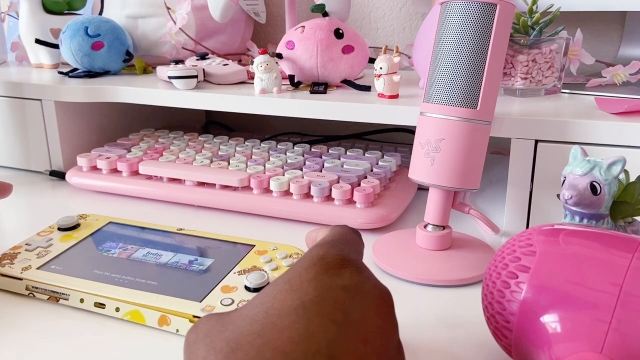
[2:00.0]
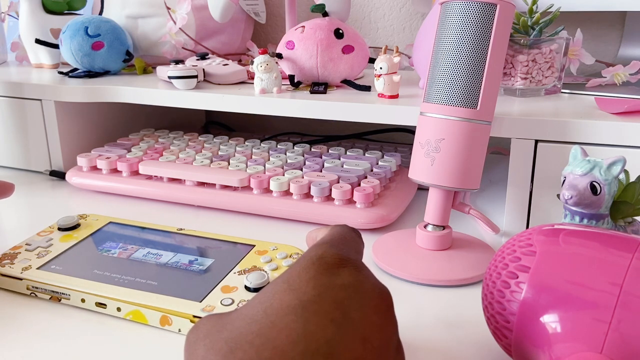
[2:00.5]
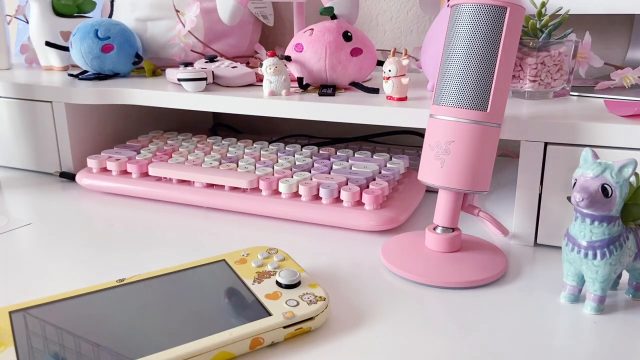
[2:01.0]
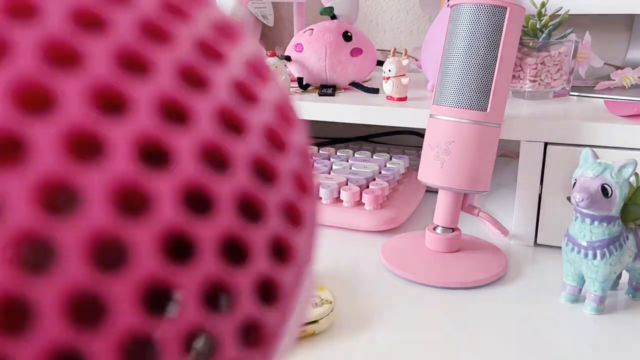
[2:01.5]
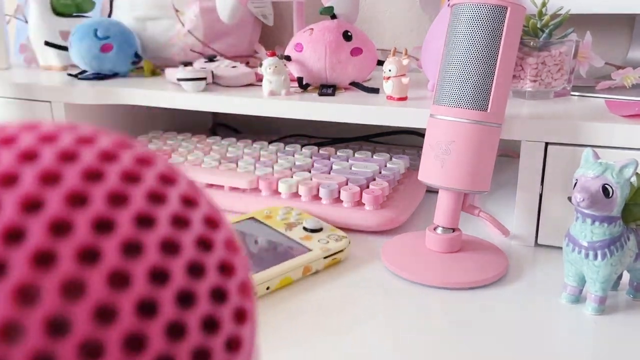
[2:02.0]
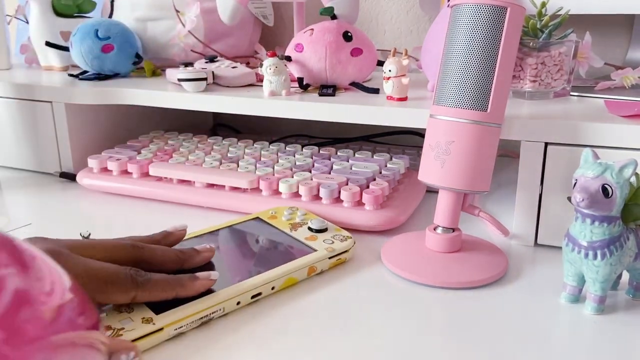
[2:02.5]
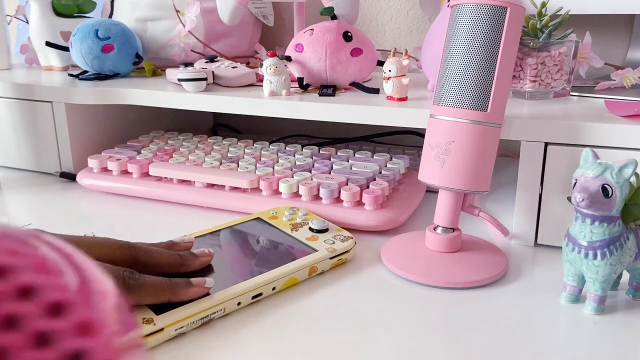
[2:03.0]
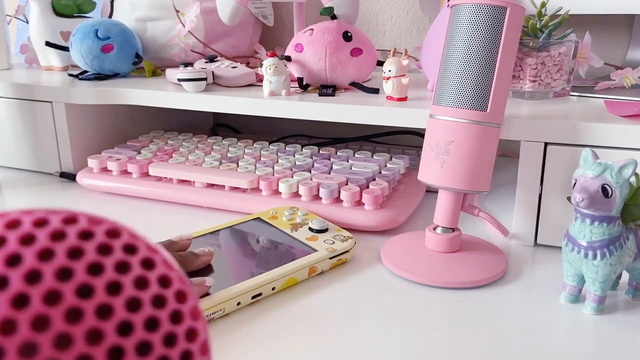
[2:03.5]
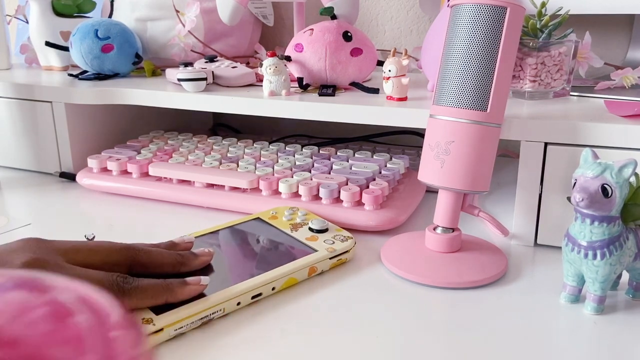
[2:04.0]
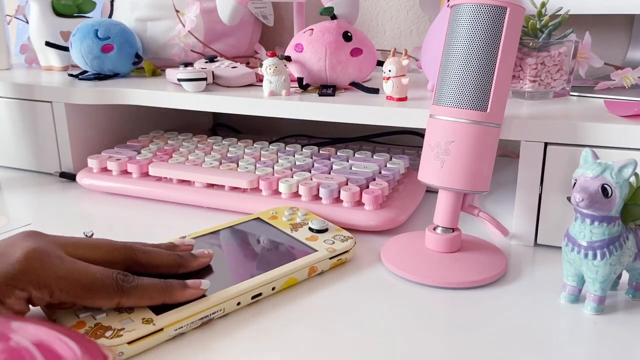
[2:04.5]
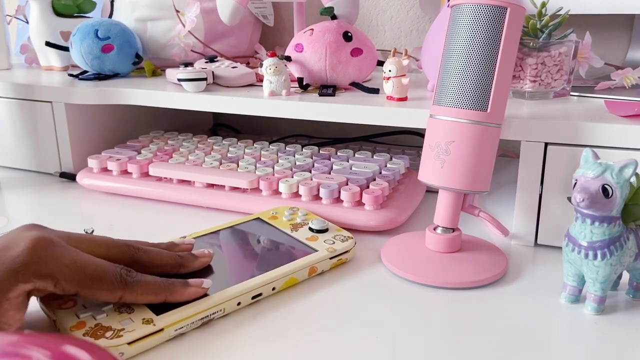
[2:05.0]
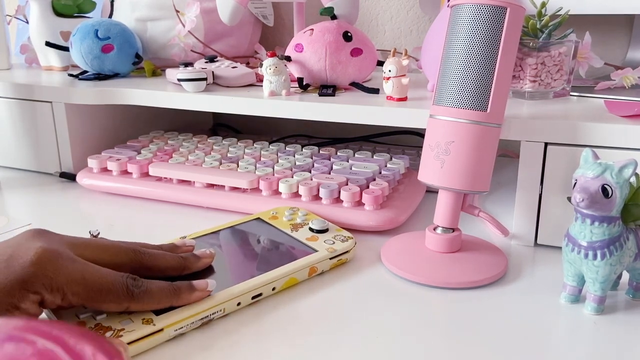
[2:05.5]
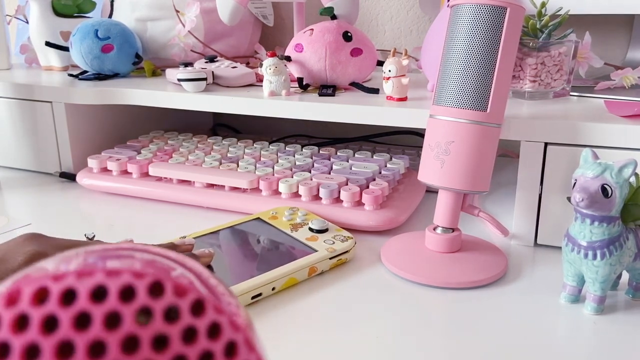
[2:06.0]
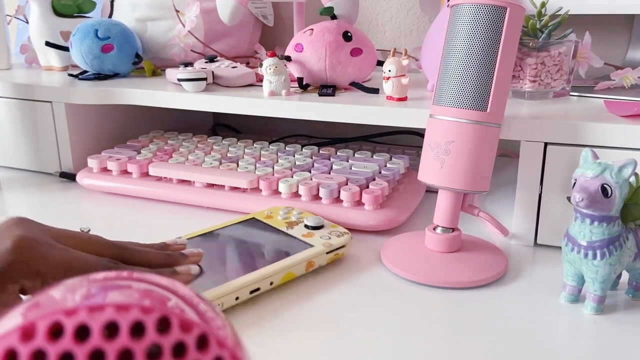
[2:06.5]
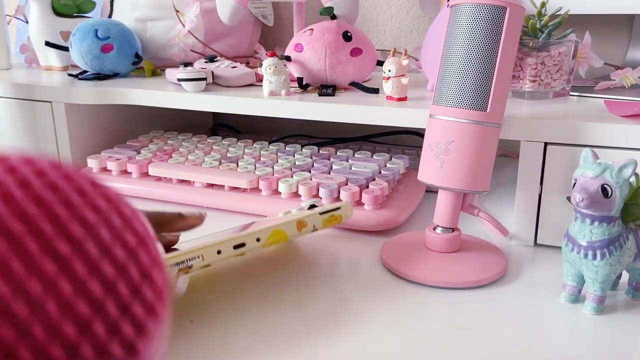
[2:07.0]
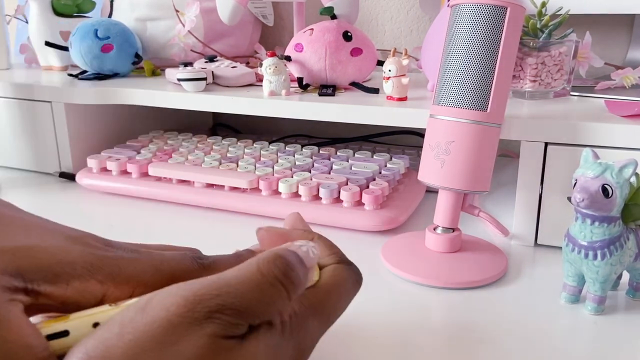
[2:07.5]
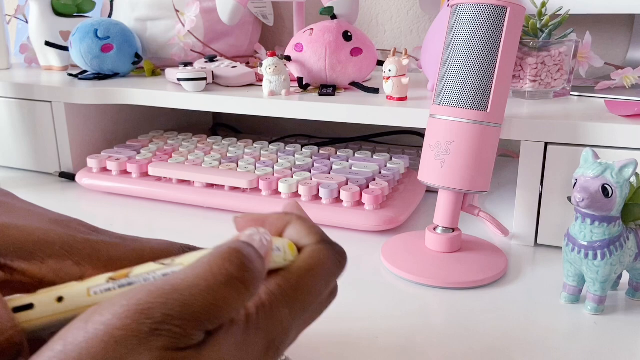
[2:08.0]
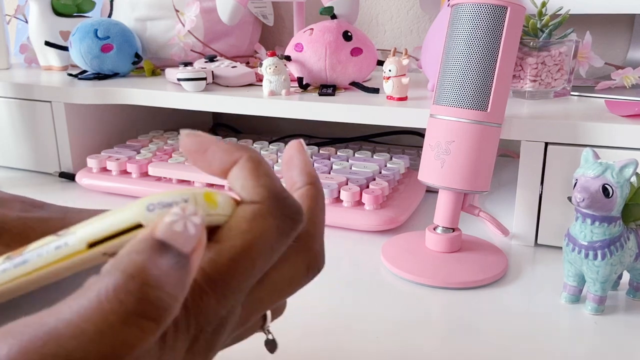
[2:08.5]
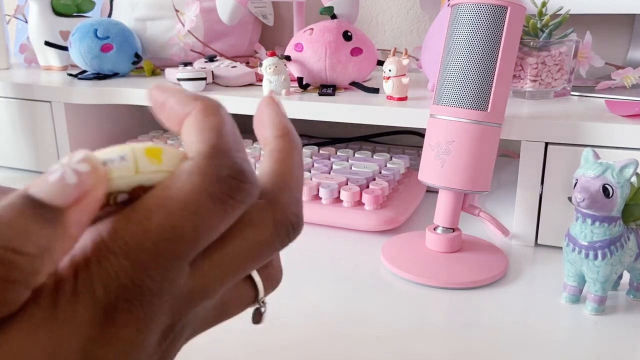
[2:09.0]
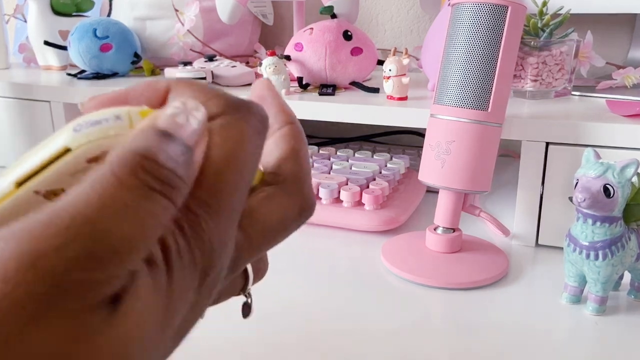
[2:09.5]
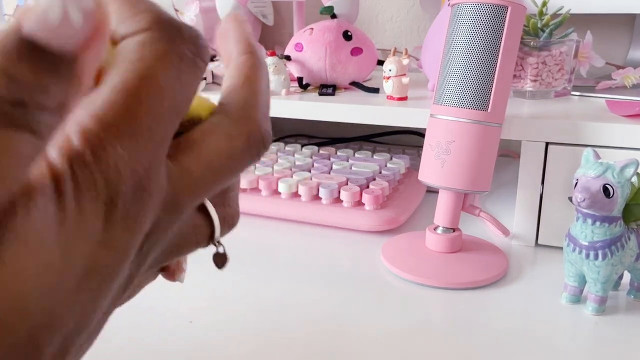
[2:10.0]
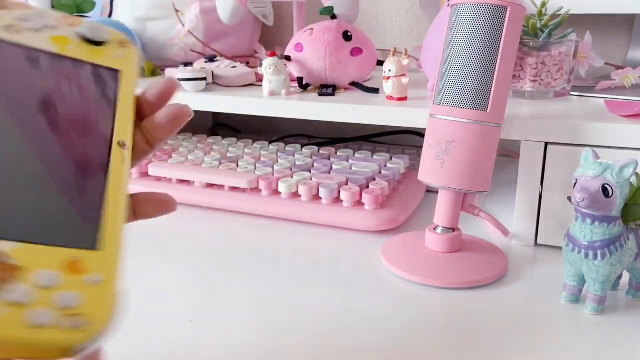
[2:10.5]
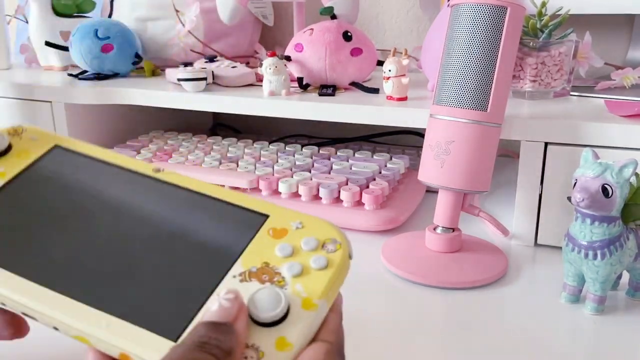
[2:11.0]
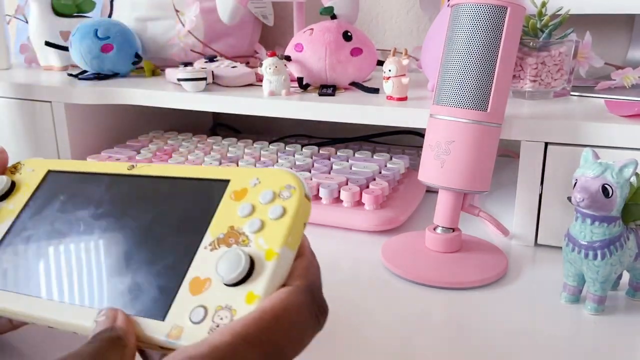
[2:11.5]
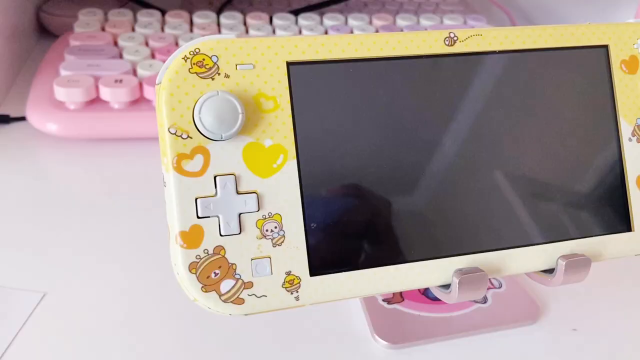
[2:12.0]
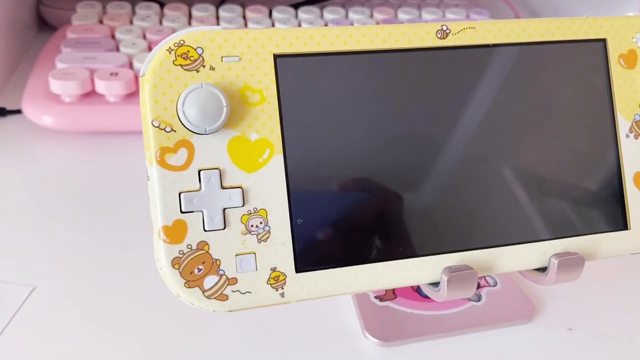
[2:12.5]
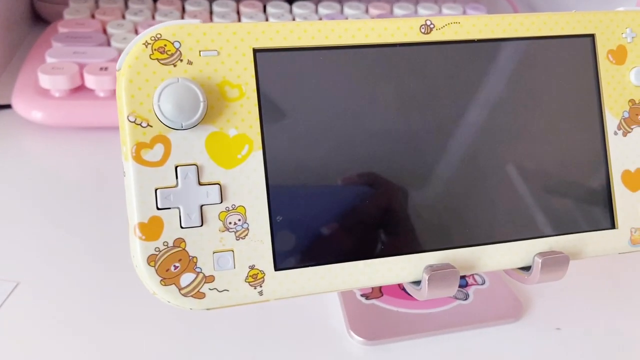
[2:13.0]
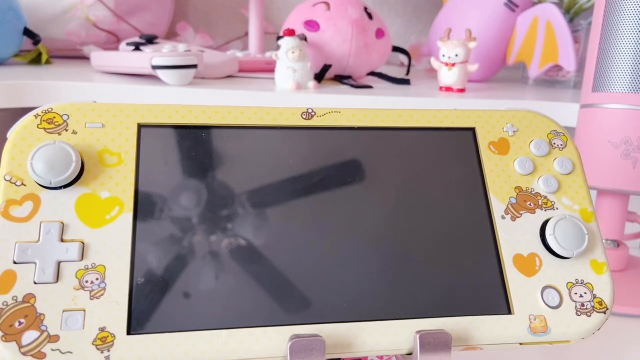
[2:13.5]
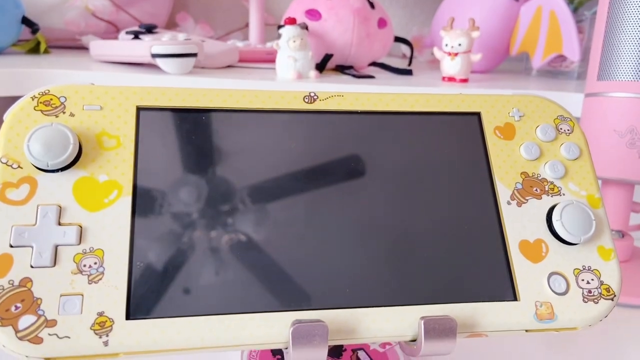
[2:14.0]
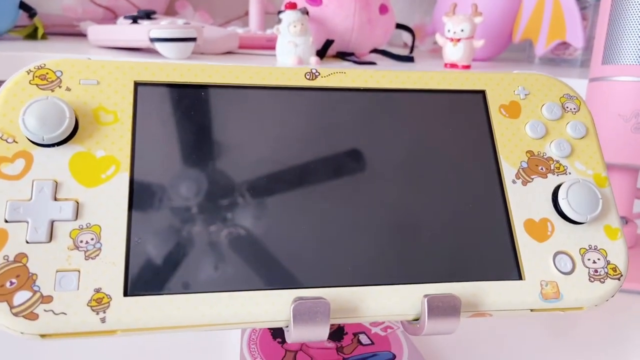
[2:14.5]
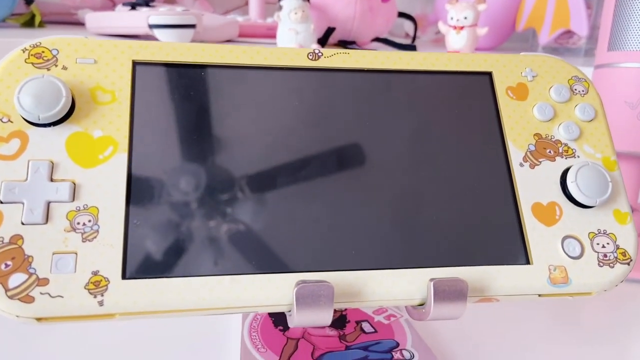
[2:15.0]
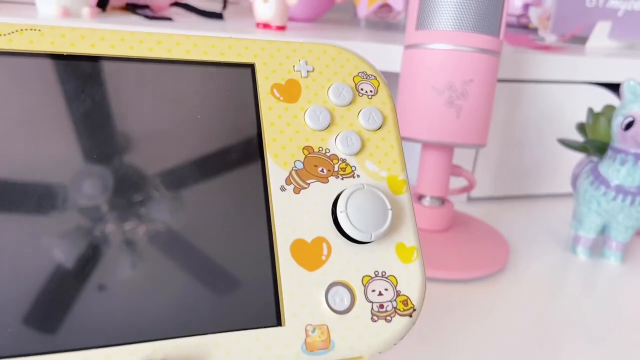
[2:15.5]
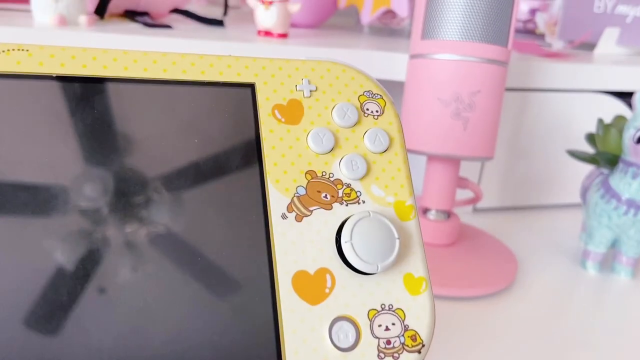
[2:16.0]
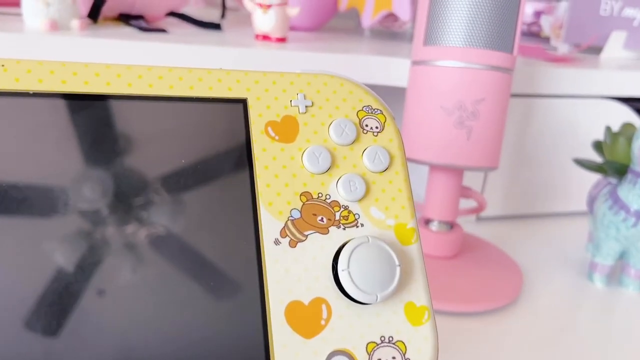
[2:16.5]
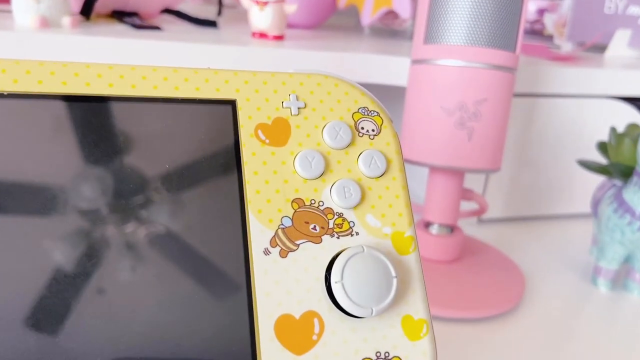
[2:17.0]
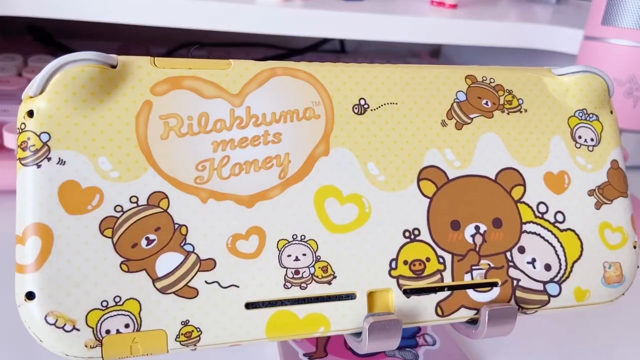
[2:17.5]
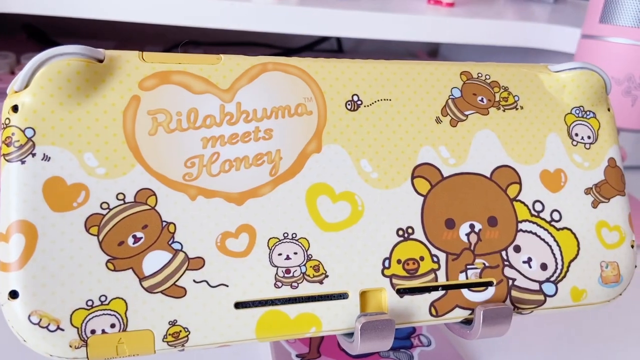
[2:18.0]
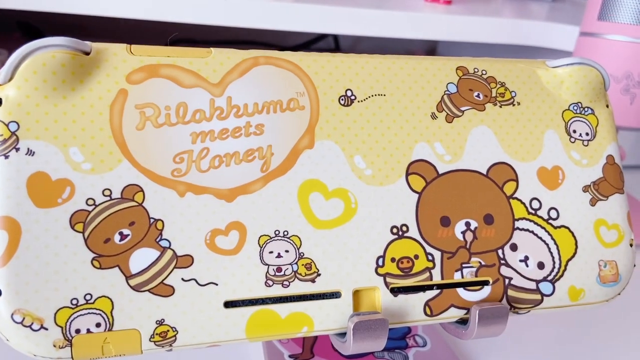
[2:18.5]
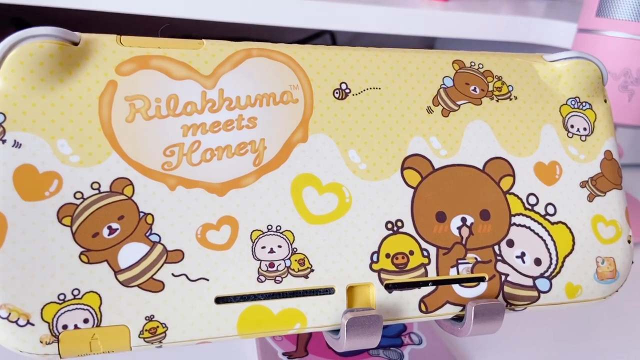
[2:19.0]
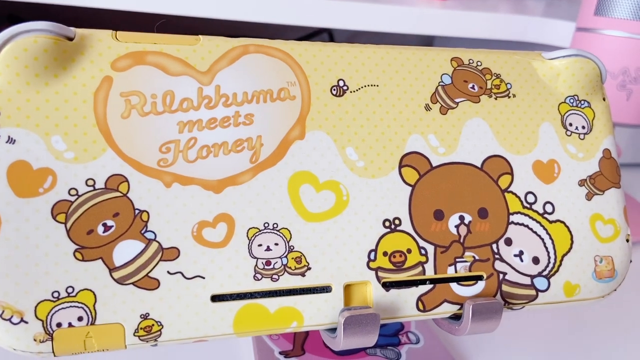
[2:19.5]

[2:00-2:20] A pink or magenta object appears in very close-up in the foreground in the lower left corner of the frame. Next, two hands, also in the lower left corner, handle a very light yellow object, rotating it on itself. The object becomes more visible in the next frame: it is a gaming console with a rather large dark screen in the center that reflects a ceiling fan hanging on the ceiling. On the left and right parts of the console there are white buttons and levers. The console is then positioned differently on the desk, showing its back portion, which has various very colorful illustrations, some depicting bears or animals in general and others little ears in yellow and orange.